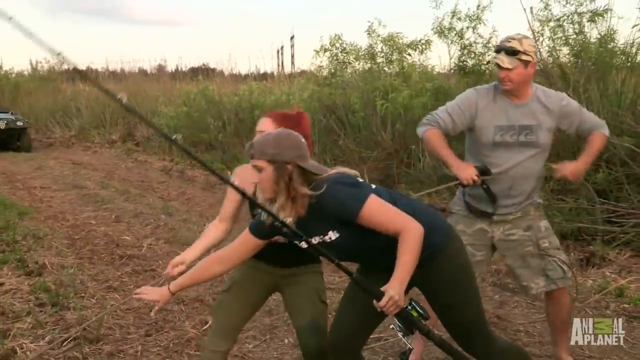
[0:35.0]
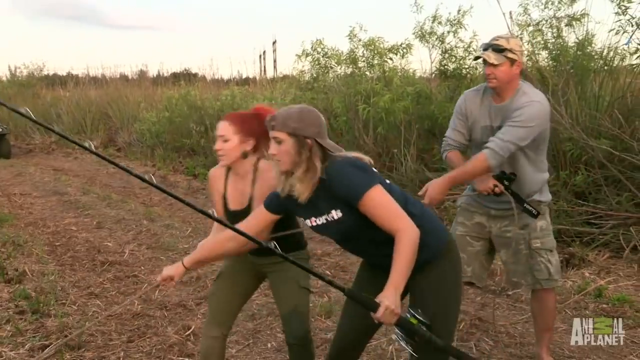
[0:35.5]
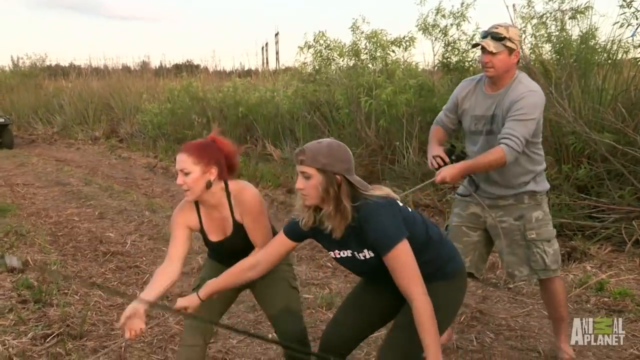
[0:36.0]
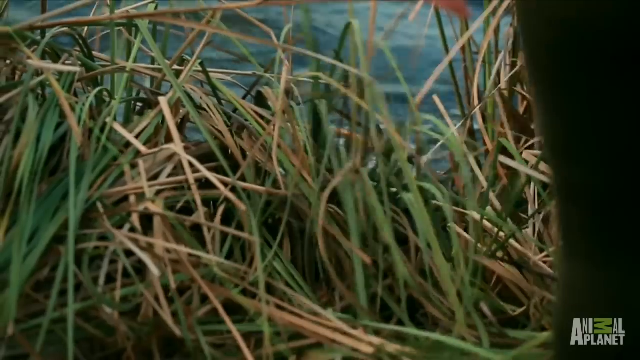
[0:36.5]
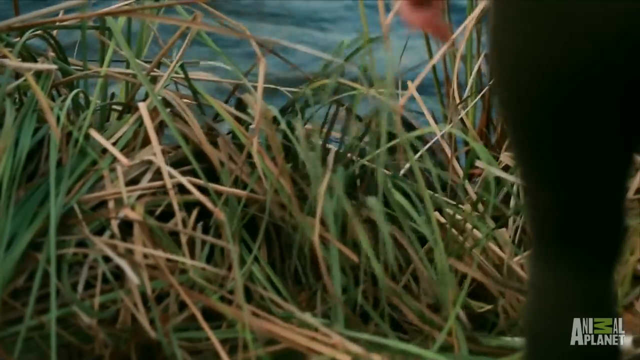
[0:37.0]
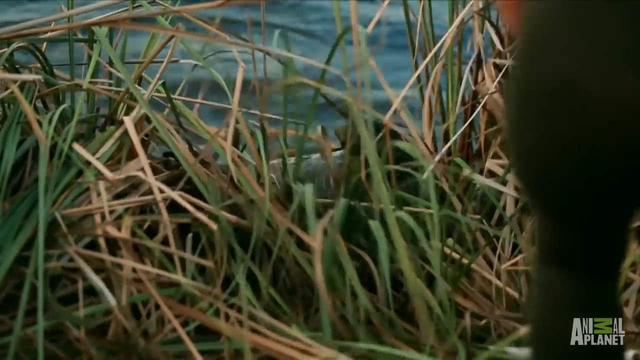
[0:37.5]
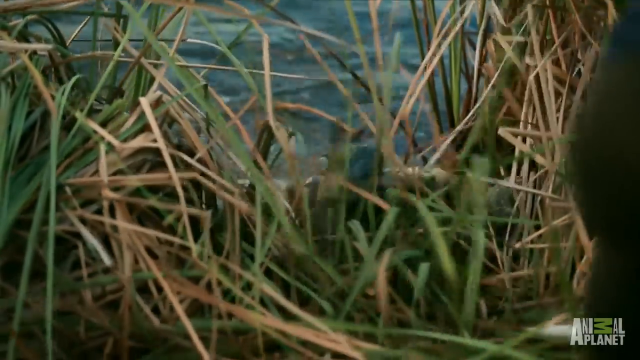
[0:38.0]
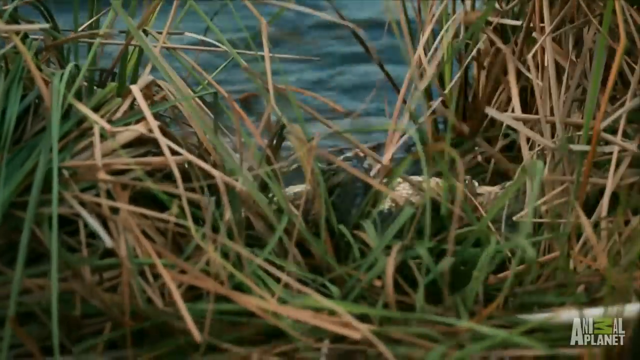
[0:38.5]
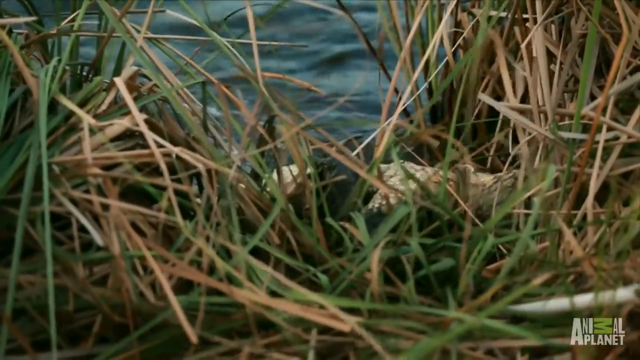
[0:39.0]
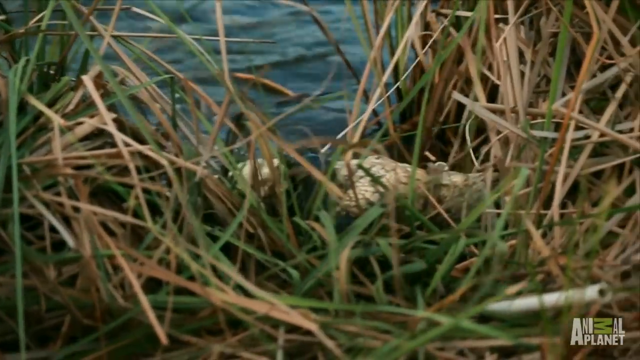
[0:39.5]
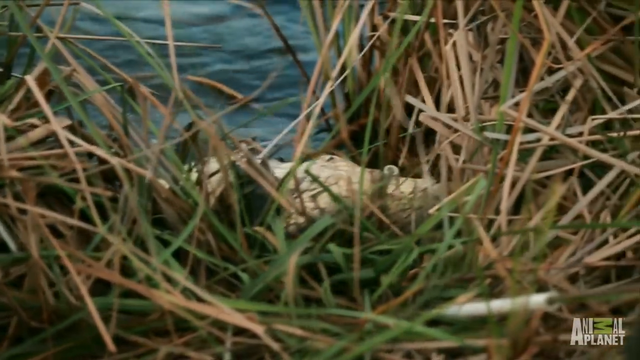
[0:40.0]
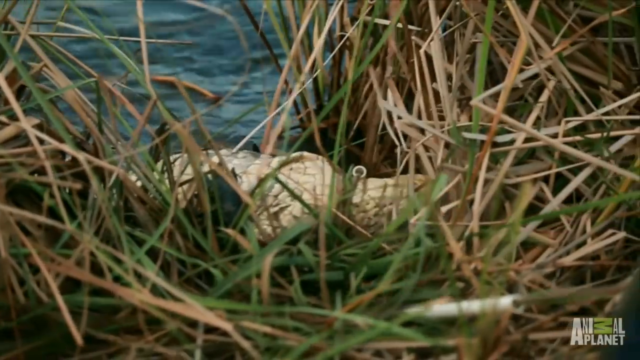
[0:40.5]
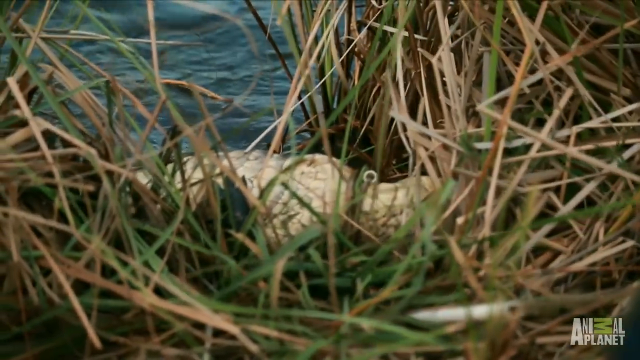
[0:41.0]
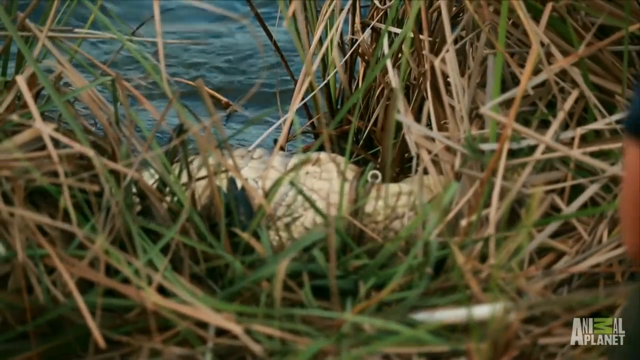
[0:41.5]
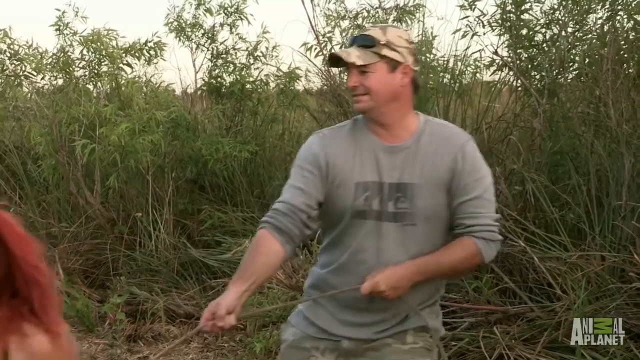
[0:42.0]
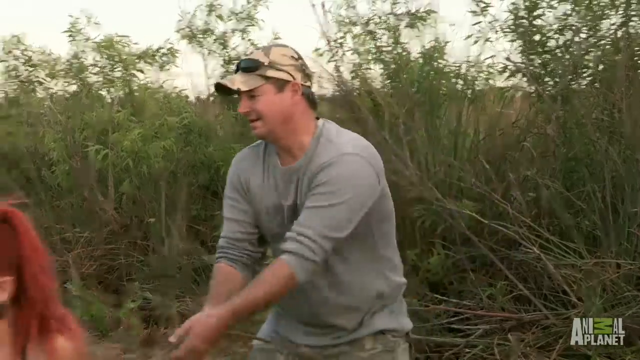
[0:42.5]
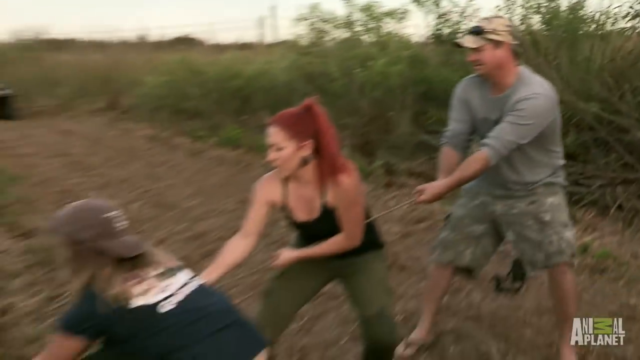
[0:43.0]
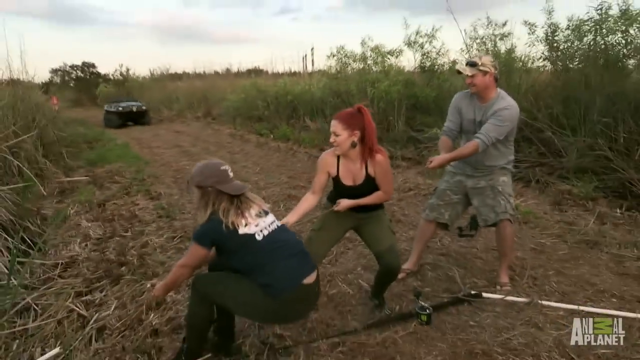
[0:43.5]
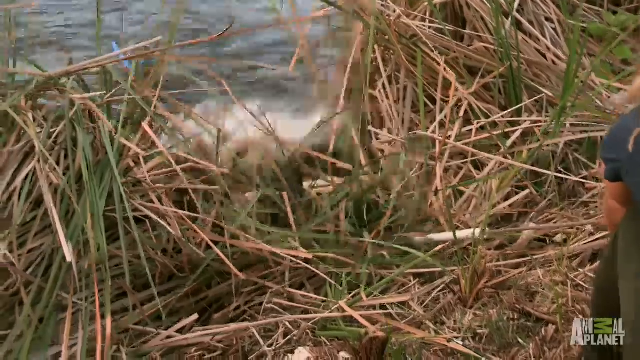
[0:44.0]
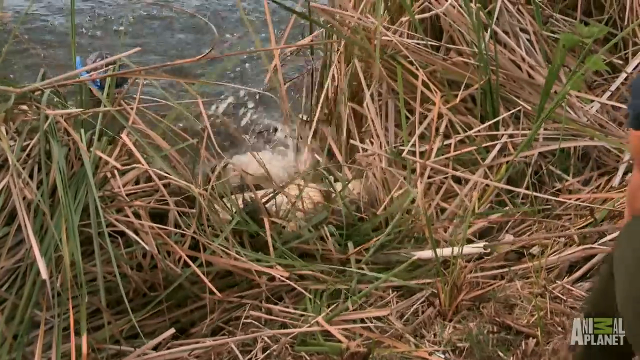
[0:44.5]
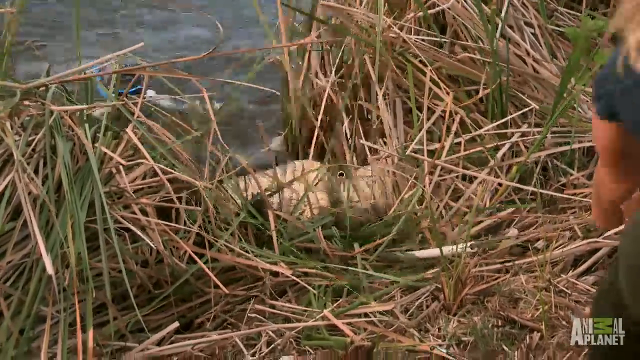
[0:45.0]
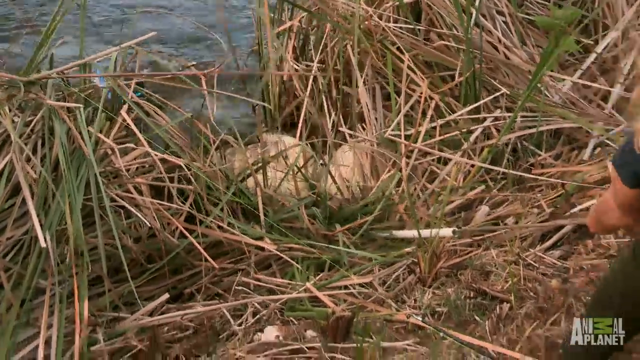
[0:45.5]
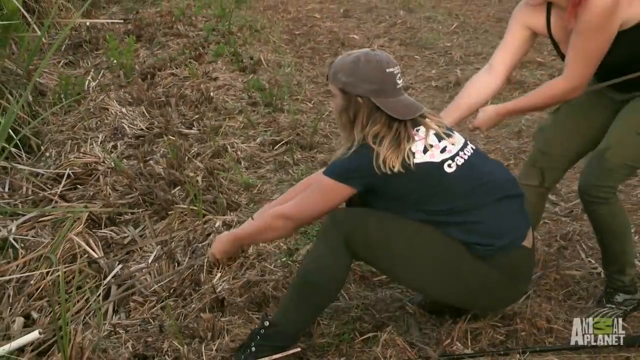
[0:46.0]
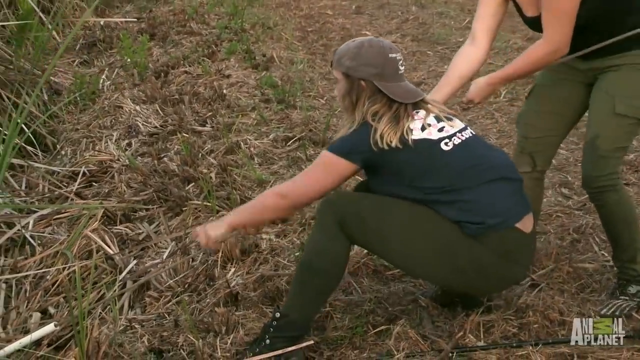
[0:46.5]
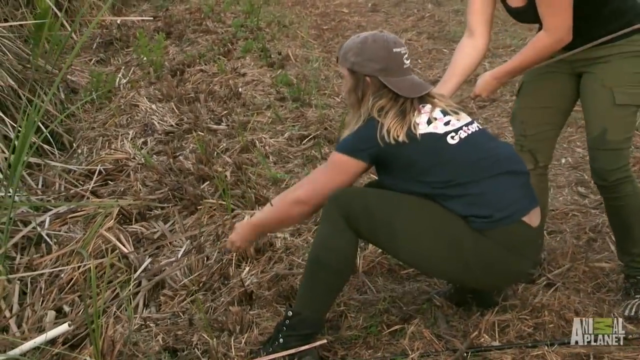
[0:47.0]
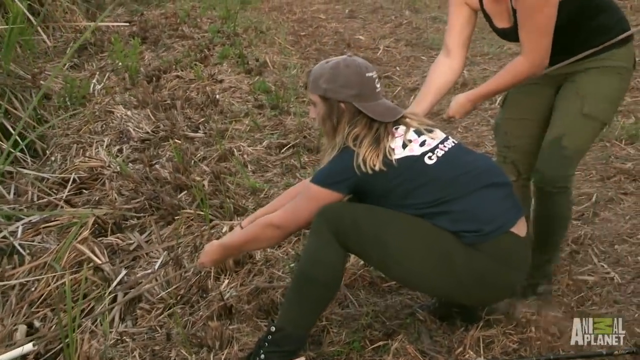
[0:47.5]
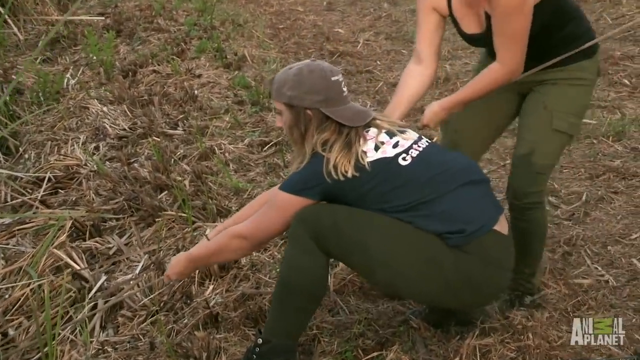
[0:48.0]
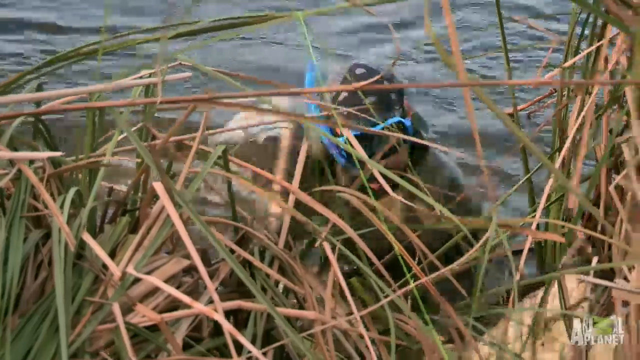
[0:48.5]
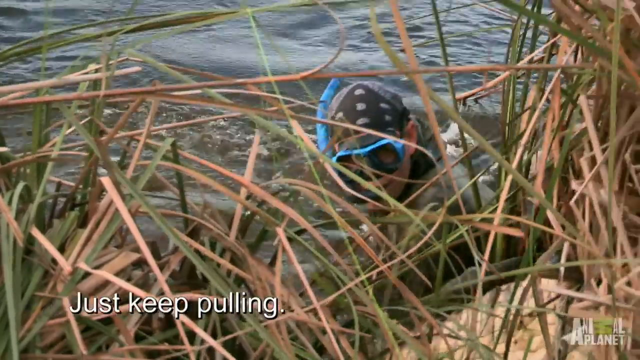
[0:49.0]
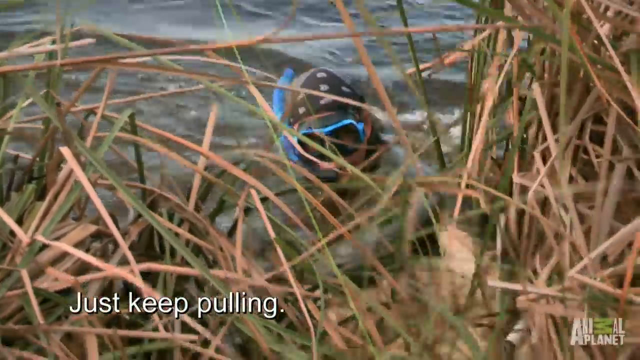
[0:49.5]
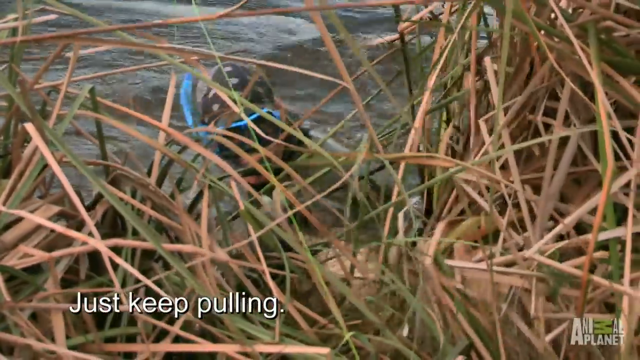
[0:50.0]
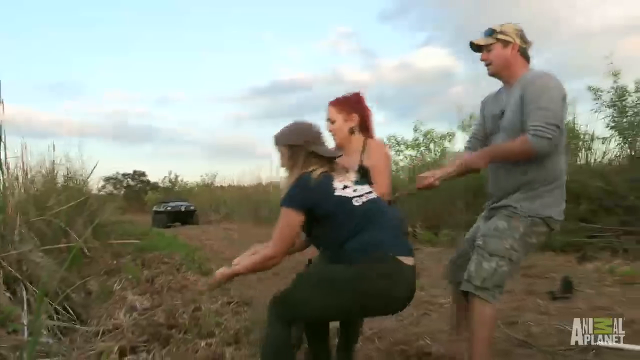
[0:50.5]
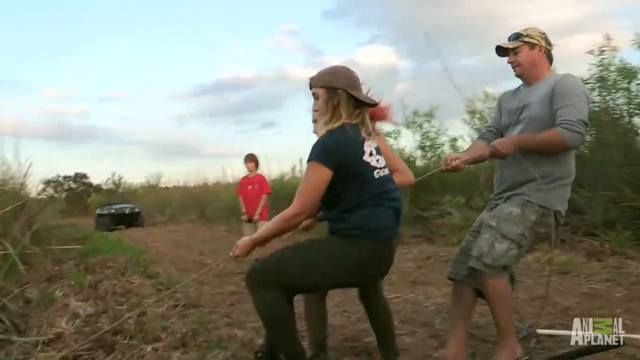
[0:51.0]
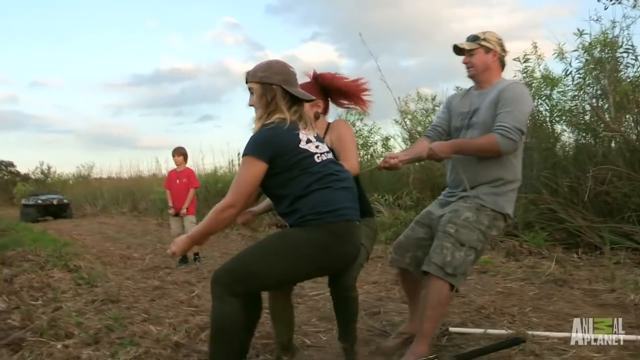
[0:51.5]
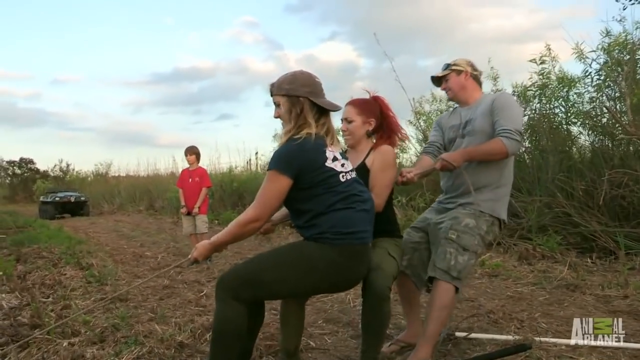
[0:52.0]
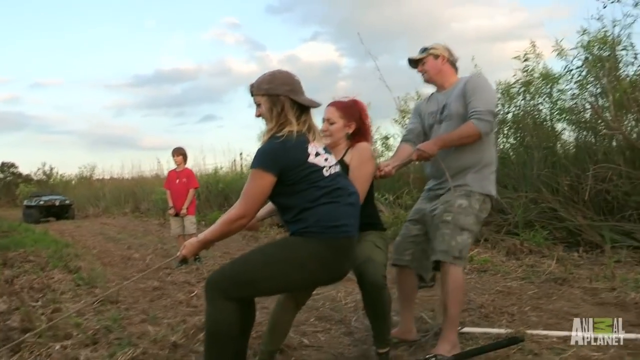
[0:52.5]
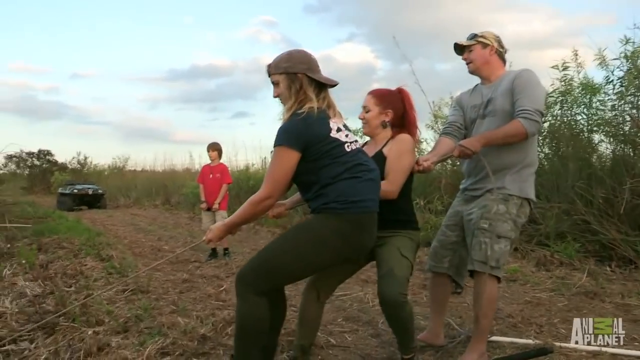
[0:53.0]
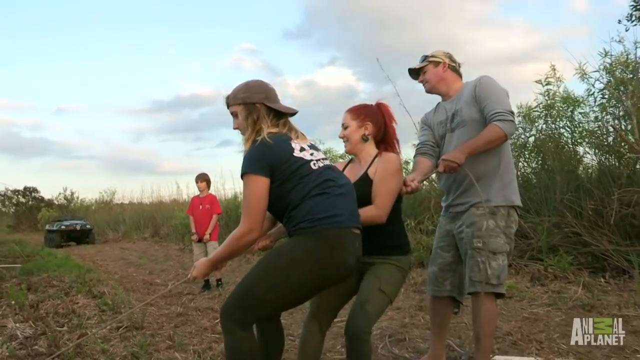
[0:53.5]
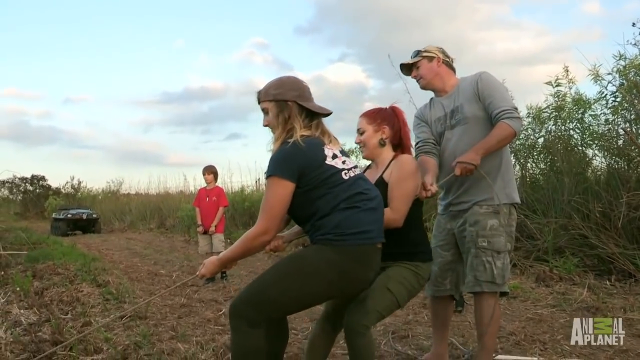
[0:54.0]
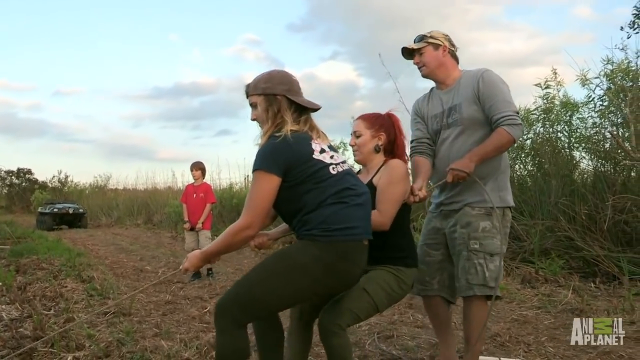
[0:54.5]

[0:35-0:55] A man and two women pull at a rope in an outdoor environment. One woman puts down her fishing rod to help pull. The man, standing, wears a gray long-sleeve shirt rolled up to his elbows and gray shorts; the two women pull at the rope while he pulls from the back, behind them. They all slowly pull the rope back. The camera switches to a shot in the reeds showing the rope leading to the water as something is pulled out, and something moves through the reeds; it looks like the alligator coming up and bending the reeds down. The alligator thrashes and struggles against the rope as it is dragged onto the land, water flying everywhere. The reeds are bent, some green and some dead and yellowed. The two women on the rope lean back, pulling hard, and a man behind the gator is wearing perhaps a wetsuit.